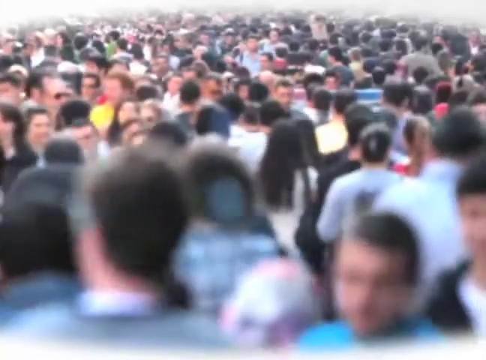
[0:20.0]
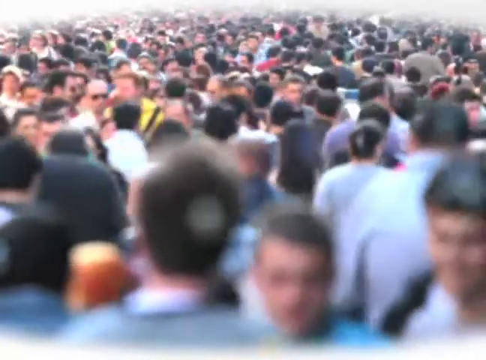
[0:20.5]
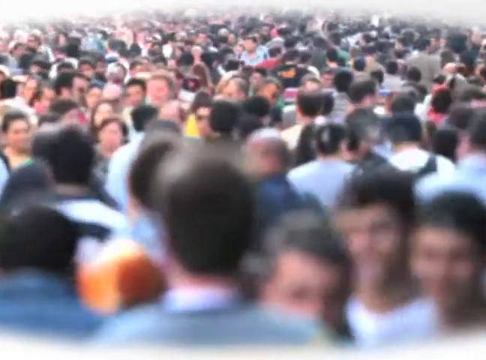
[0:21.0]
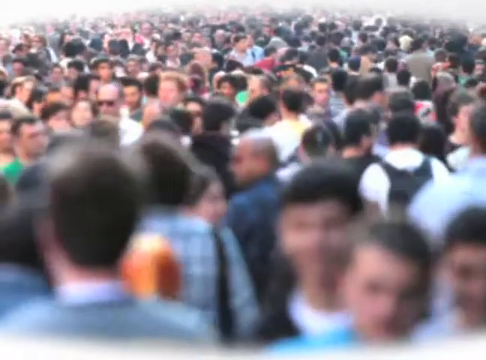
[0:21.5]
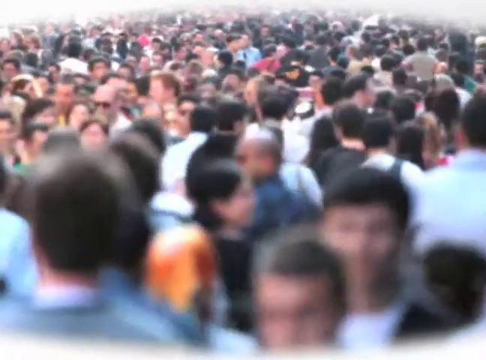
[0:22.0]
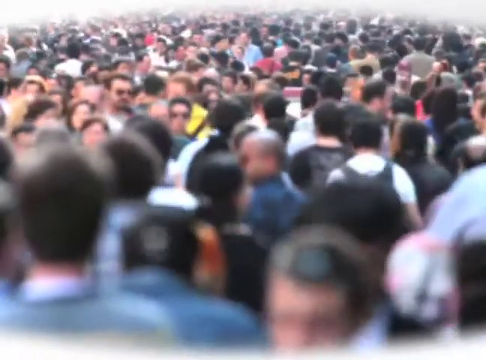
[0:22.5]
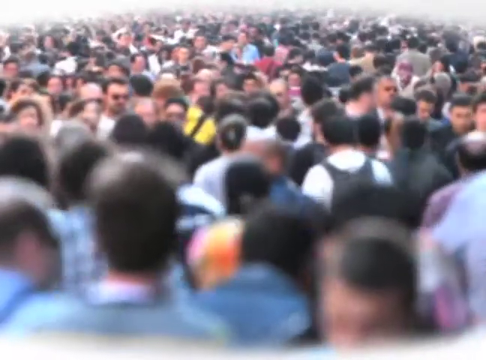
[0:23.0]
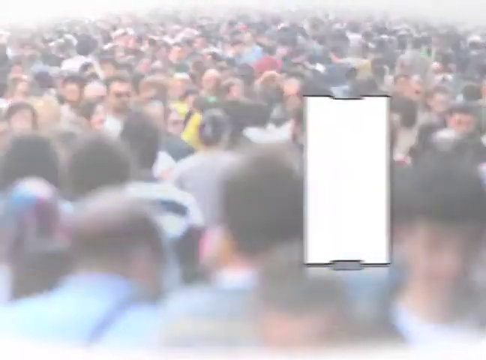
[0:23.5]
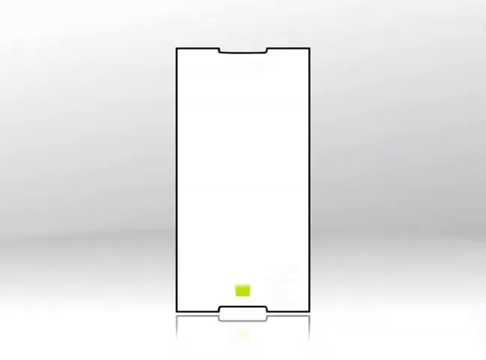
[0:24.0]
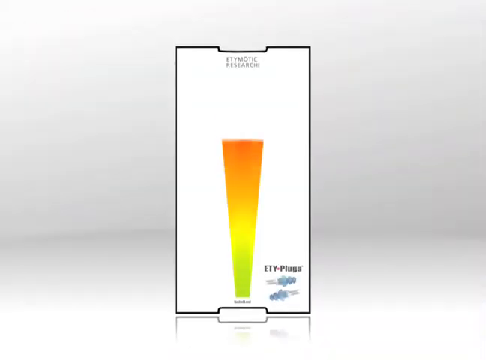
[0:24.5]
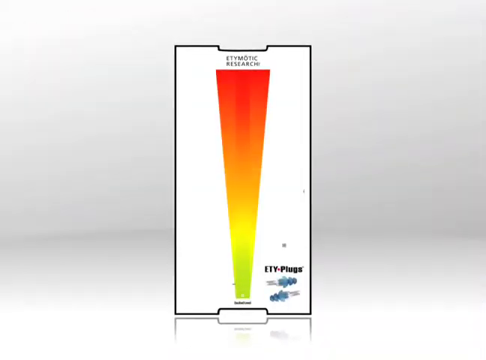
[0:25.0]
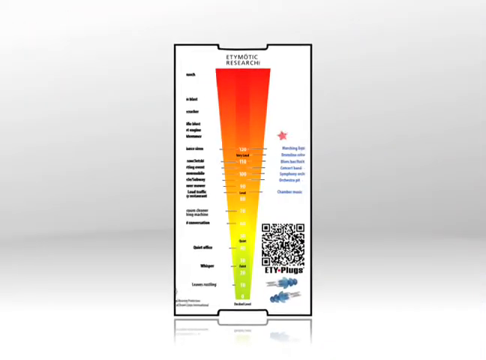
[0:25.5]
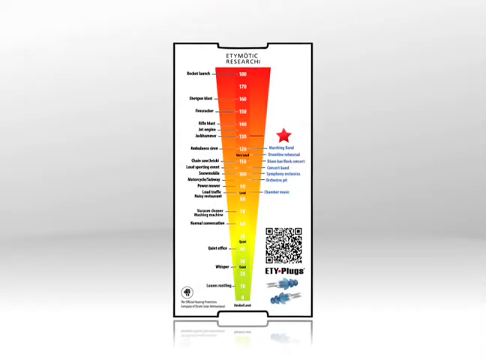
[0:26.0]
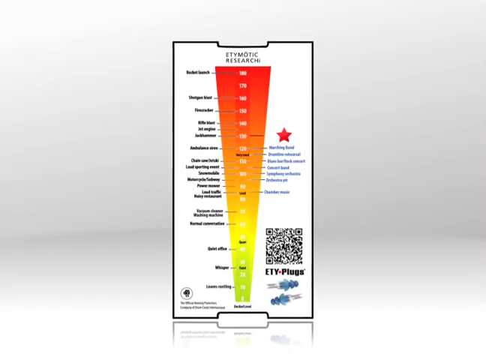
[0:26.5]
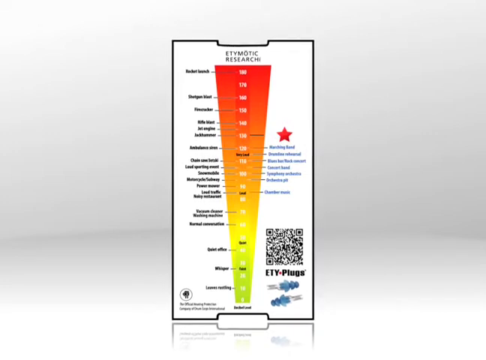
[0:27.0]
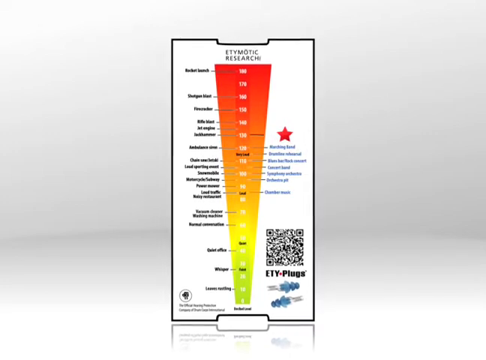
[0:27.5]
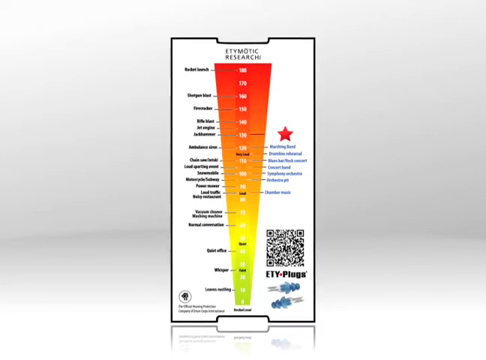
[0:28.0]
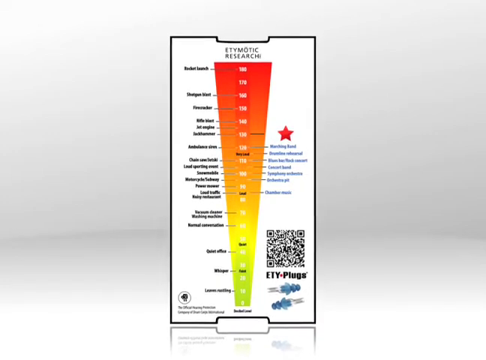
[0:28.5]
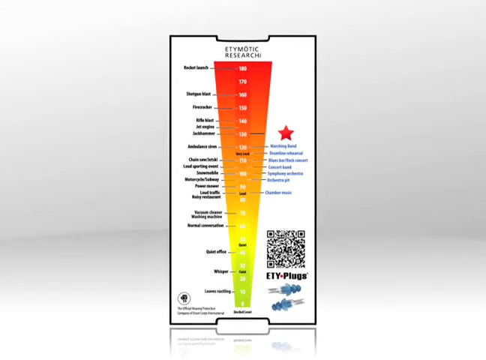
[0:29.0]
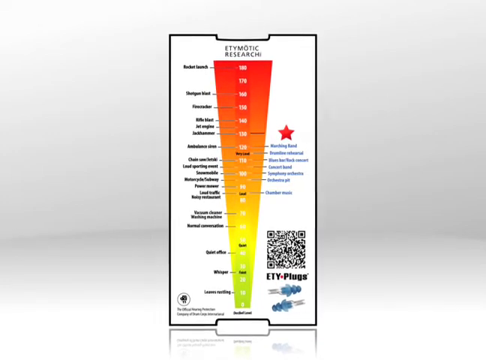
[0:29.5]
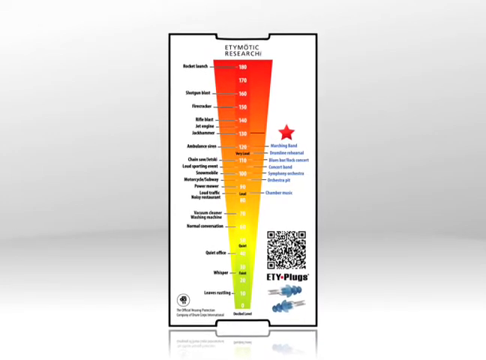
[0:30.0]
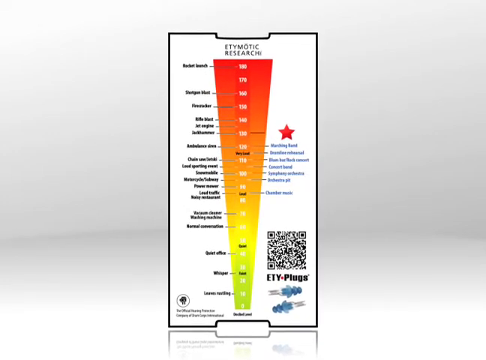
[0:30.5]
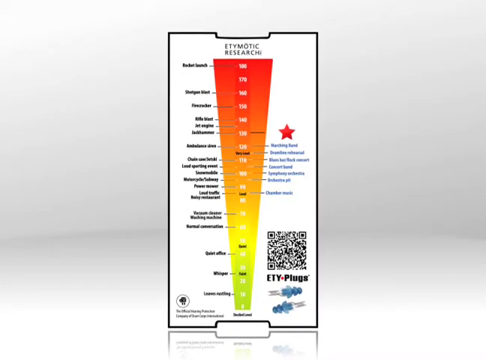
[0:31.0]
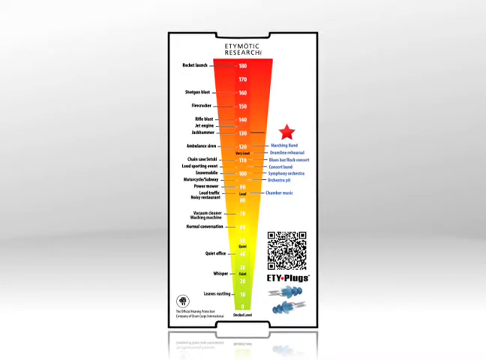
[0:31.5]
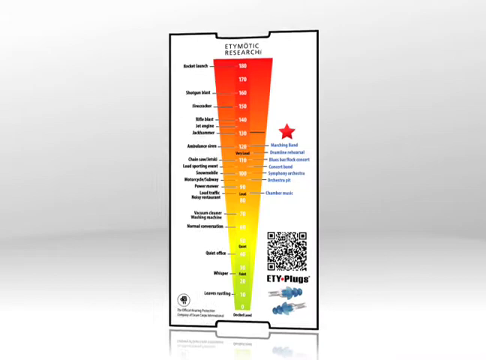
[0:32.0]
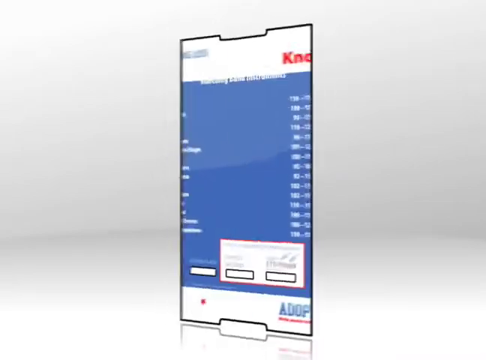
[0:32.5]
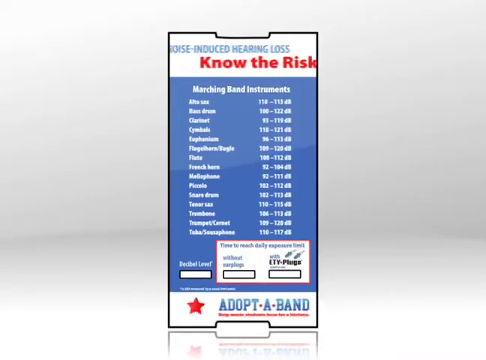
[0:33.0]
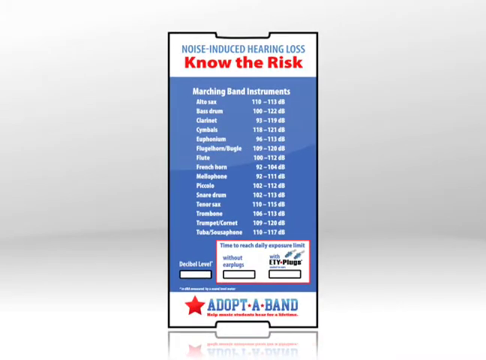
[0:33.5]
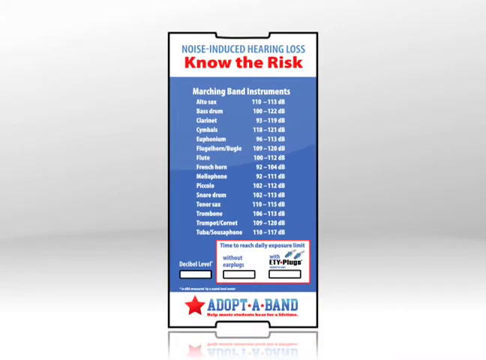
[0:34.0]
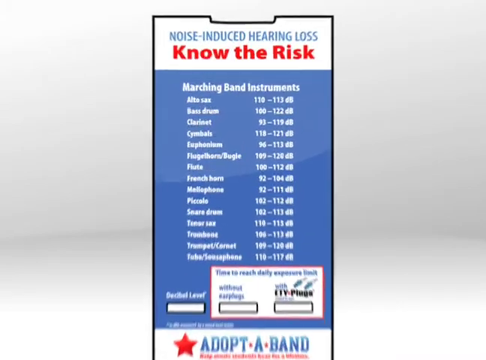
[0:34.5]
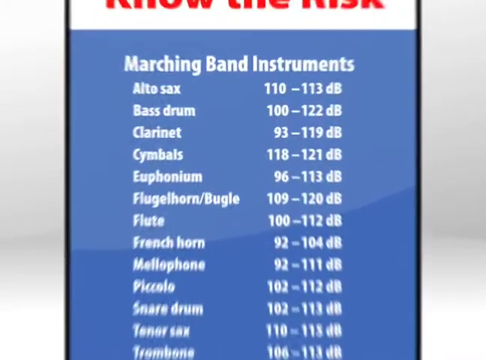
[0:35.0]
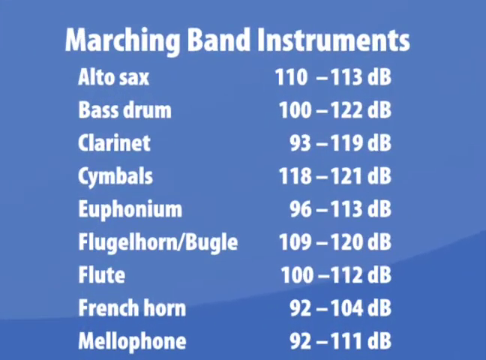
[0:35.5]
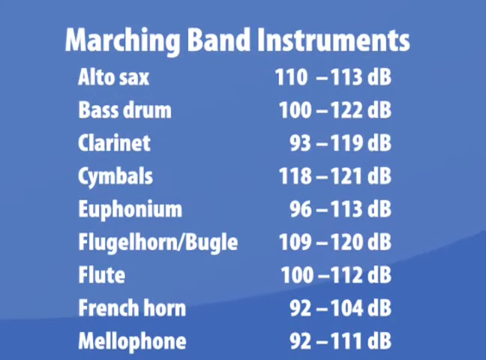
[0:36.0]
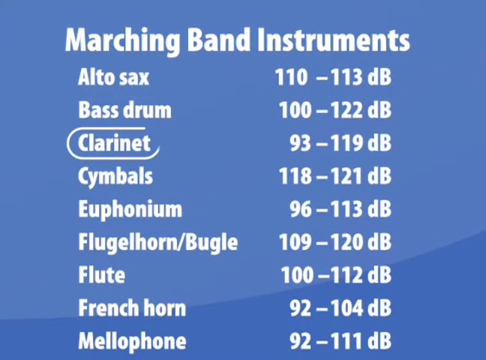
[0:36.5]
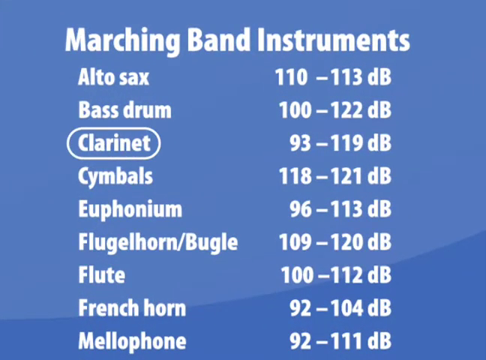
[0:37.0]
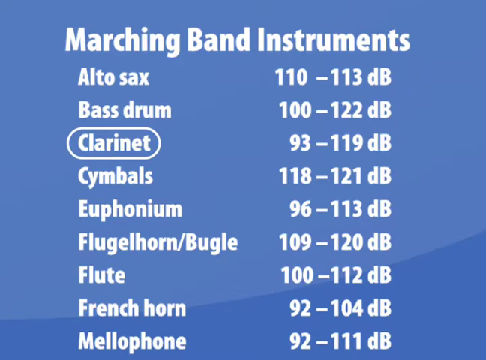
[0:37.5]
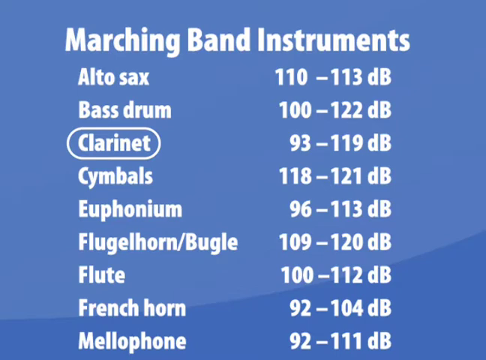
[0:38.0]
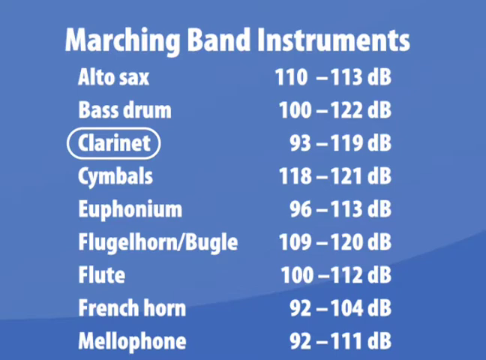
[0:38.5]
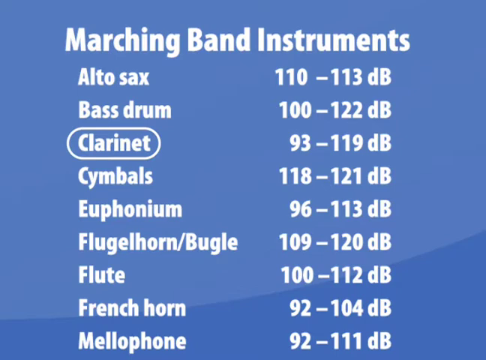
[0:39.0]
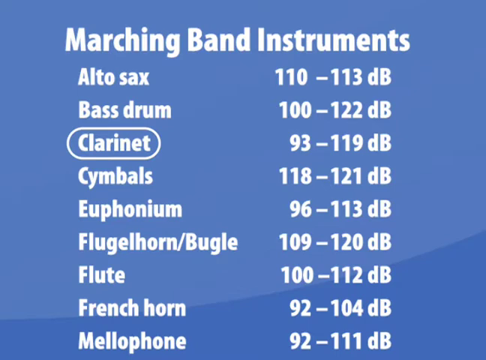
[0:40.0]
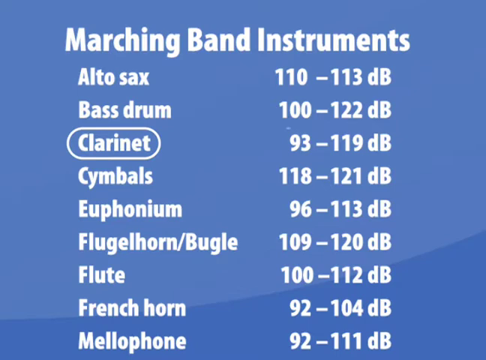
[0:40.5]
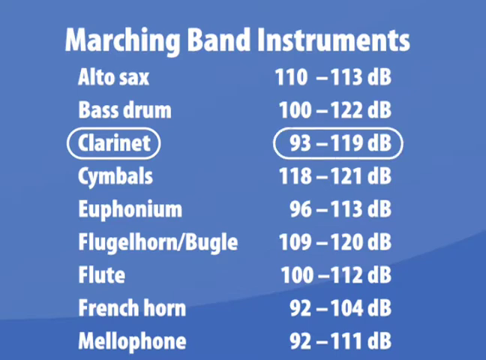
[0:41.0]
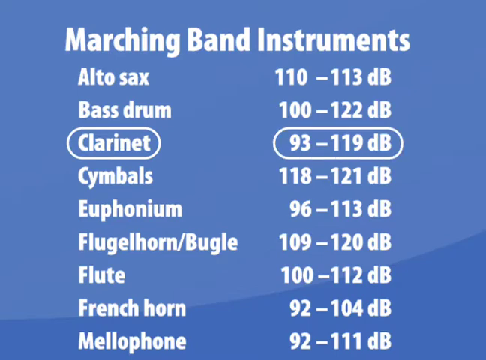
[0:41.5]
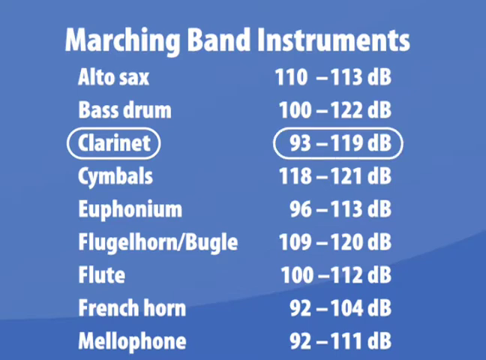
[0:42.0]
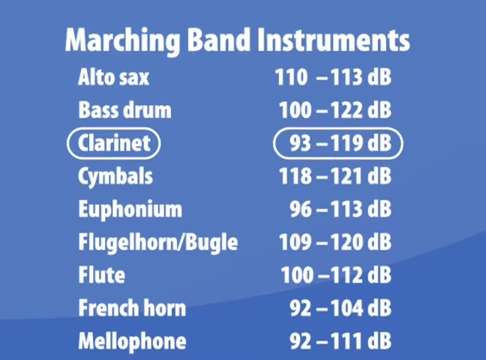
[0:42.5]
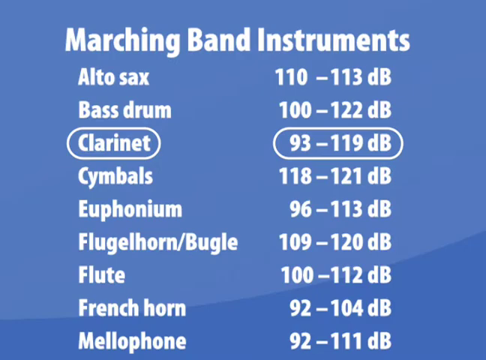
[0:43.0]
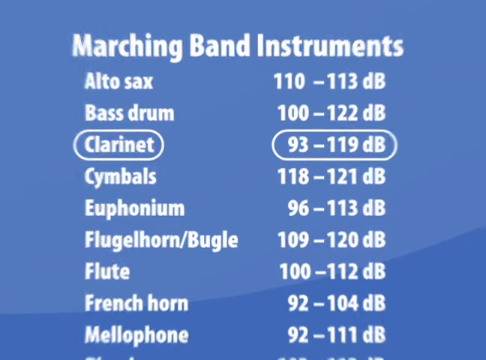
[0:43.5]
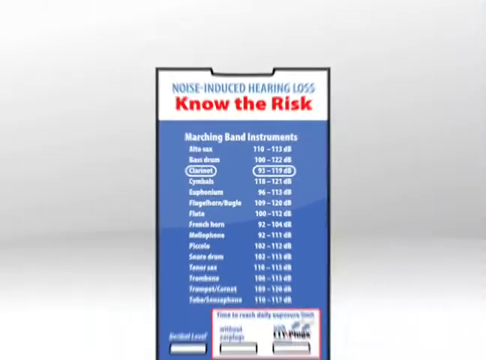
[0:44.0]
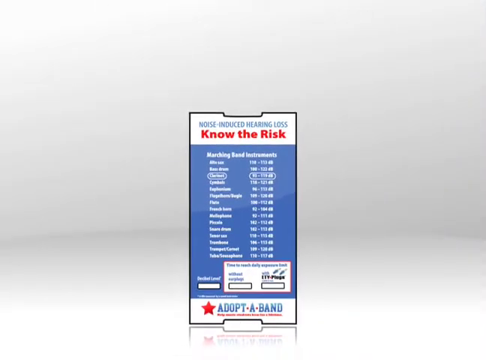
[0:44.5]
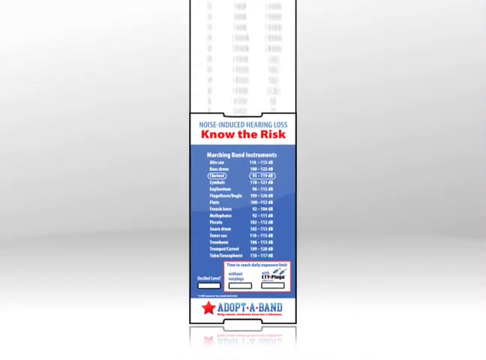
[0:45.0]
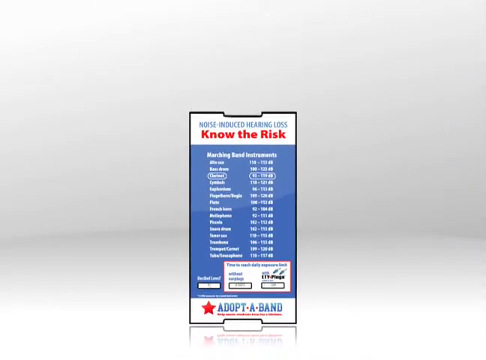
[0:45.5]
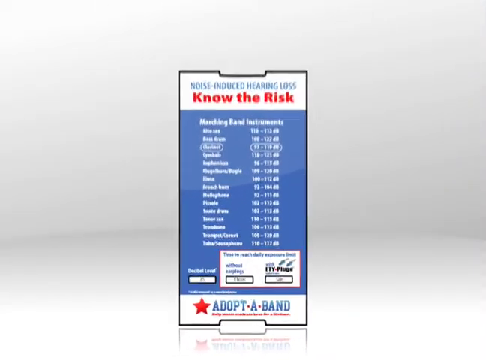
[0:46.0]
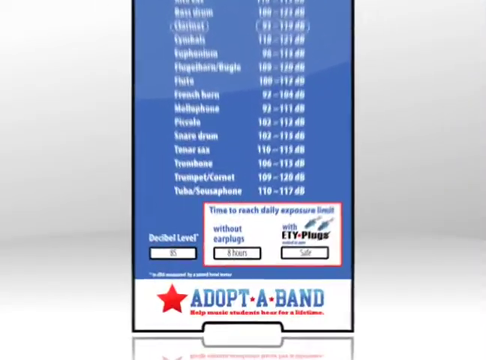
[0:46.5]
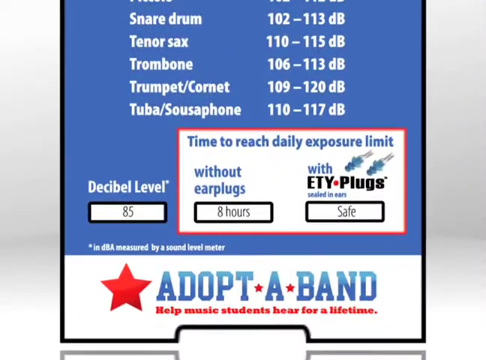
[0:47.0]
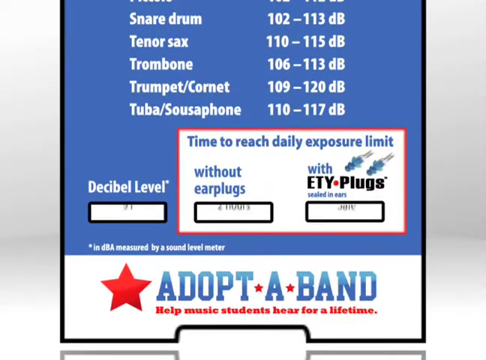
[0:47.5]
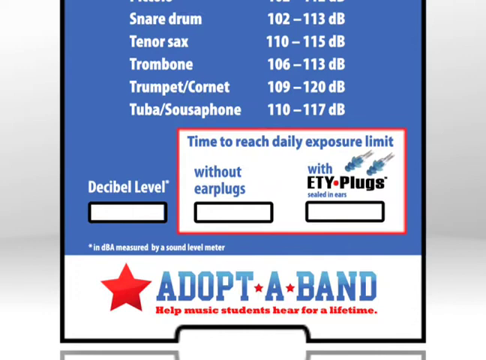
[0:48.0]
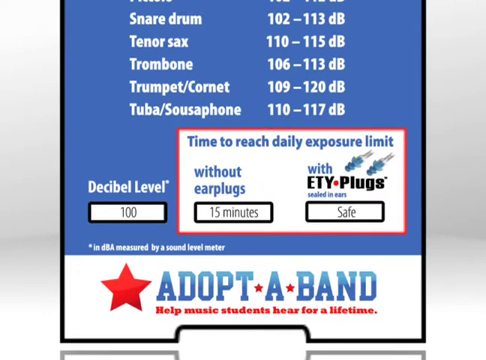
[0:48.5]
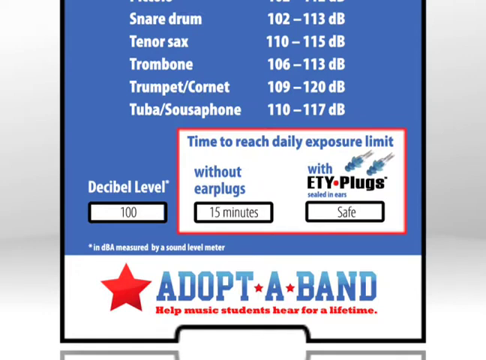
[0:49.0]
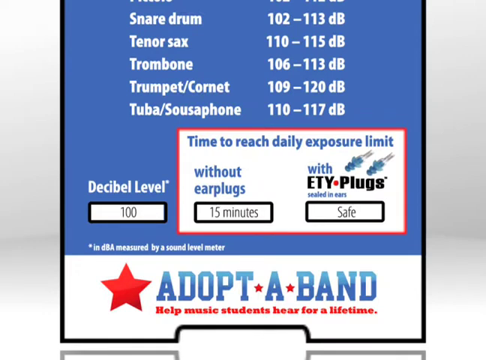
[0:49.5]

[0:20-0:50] The view changes to a gigantic crowd, the kind seen in Manhattan: a complete sea of people in which no specific people or faces can be made out. The video then fades to white and shows an image with blurry text at the top. It shows different levels of noise as a trapezoid, small and green at the bottom and growing very large and orange-red at the top. Numbers written in the middle mark the different levels, and lines of text point to each part of the trapezoid. In the bottom right it says "ETY-plugs." The image then flips around and reads "noise-induced hearing loss, know the risk." Next it shows marching band instruments in a list of around 14 or 15, each with how much noise it makes in dB. The view zooms in on the image, showing a range of two numbers for each instrument.